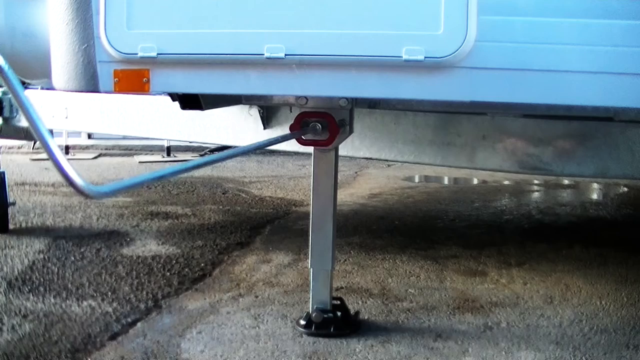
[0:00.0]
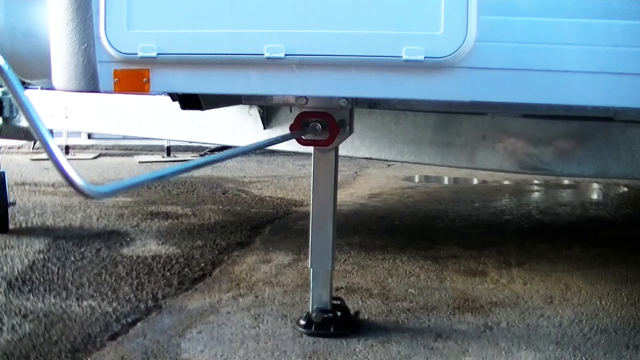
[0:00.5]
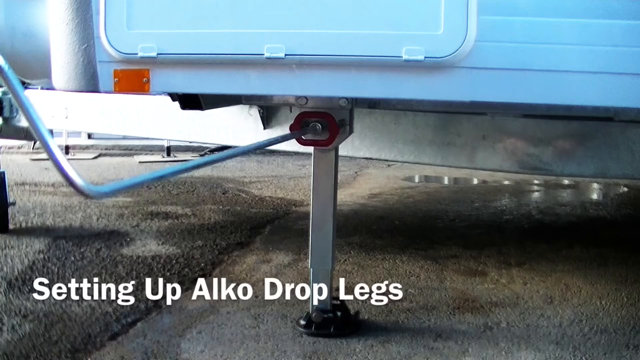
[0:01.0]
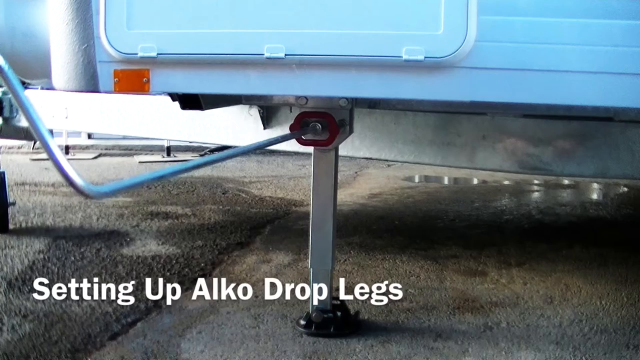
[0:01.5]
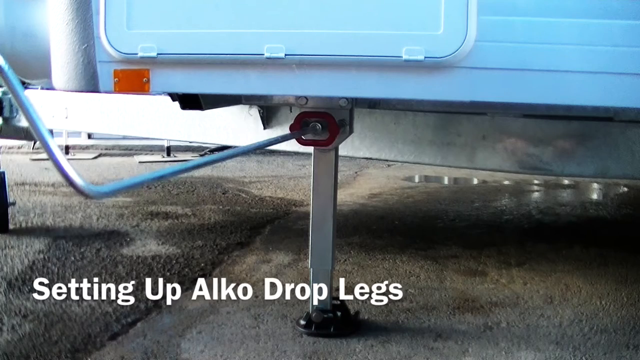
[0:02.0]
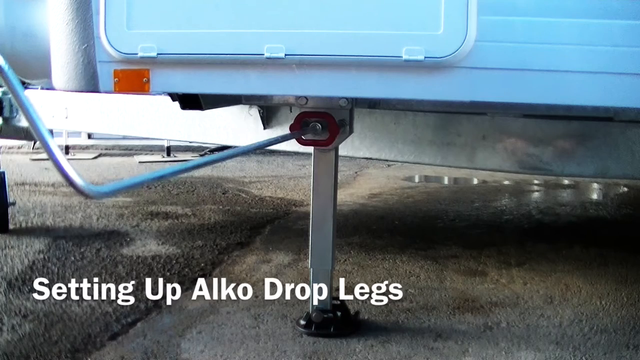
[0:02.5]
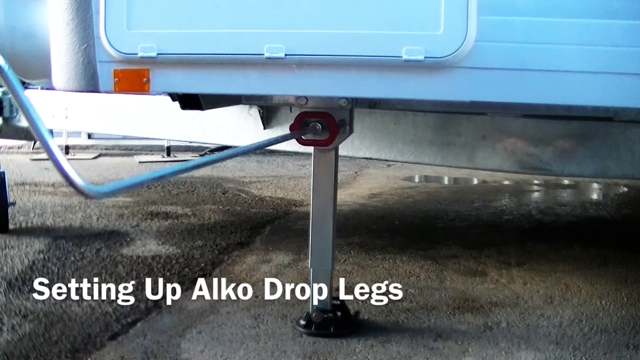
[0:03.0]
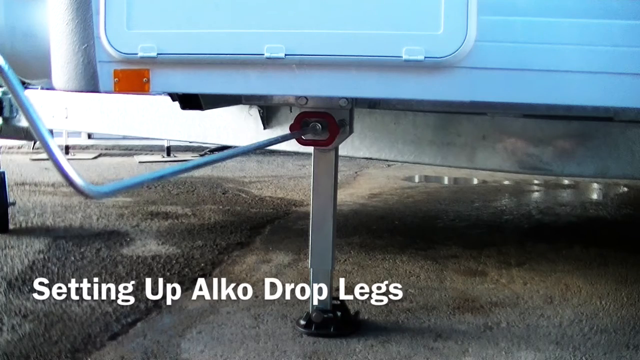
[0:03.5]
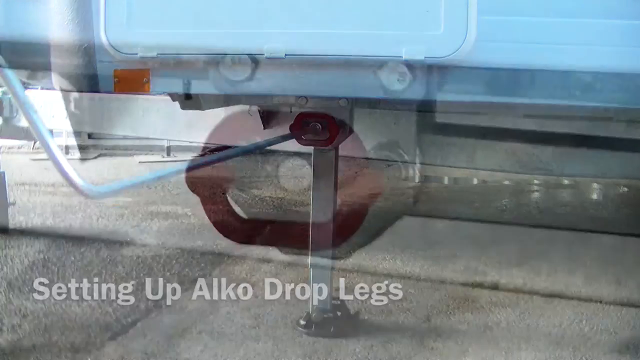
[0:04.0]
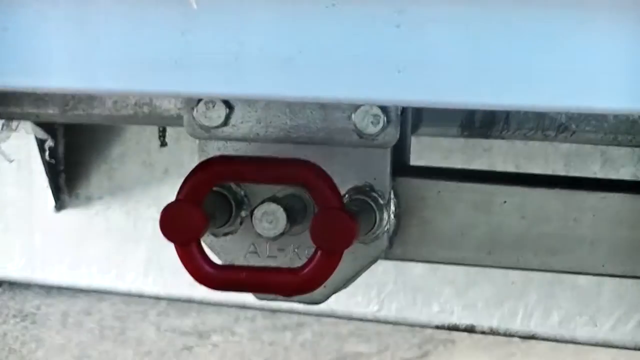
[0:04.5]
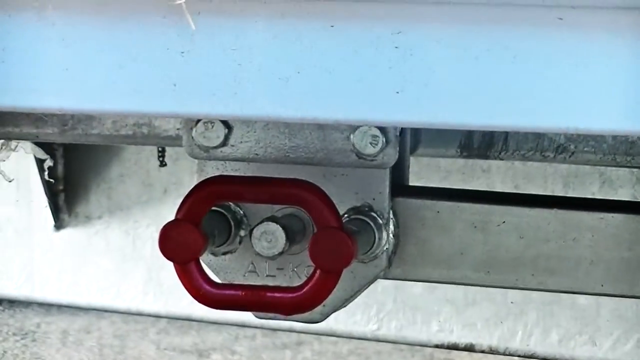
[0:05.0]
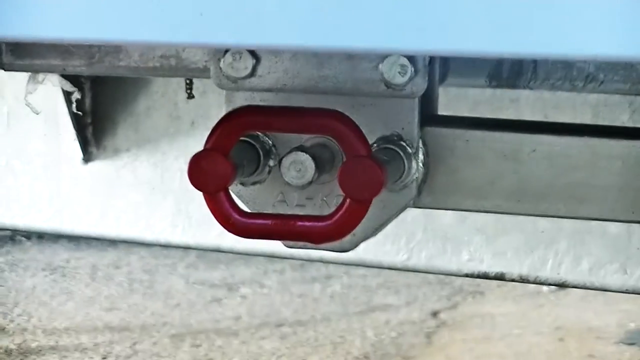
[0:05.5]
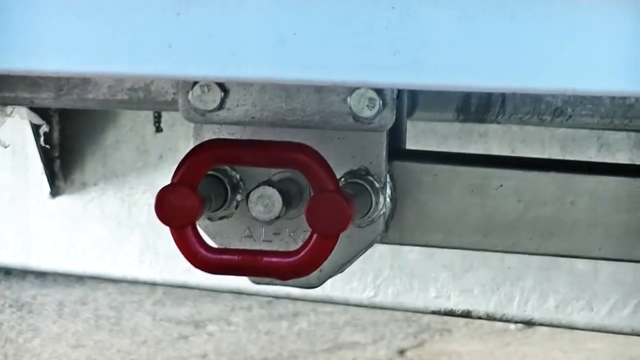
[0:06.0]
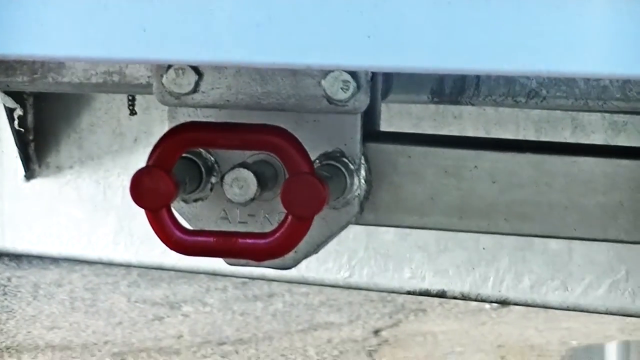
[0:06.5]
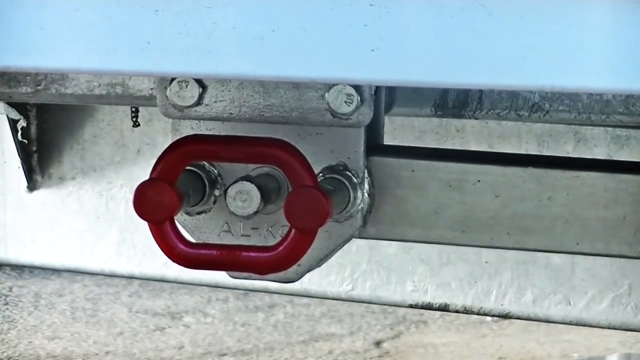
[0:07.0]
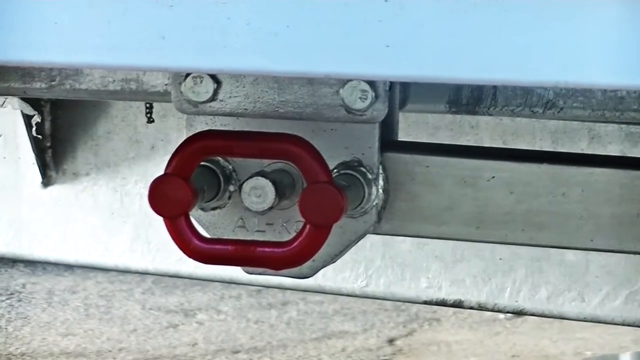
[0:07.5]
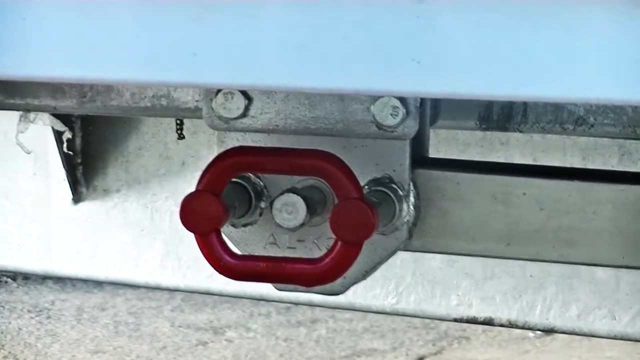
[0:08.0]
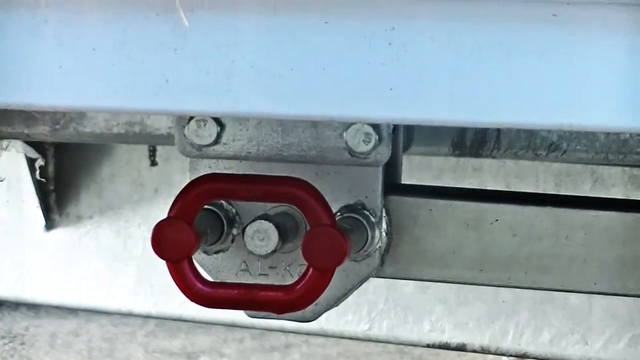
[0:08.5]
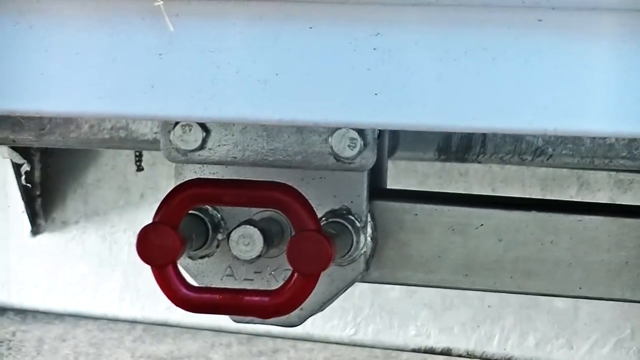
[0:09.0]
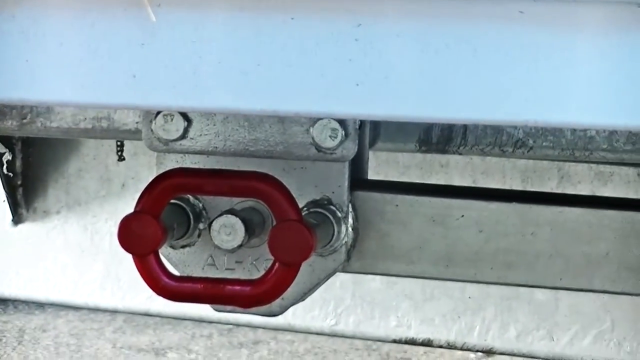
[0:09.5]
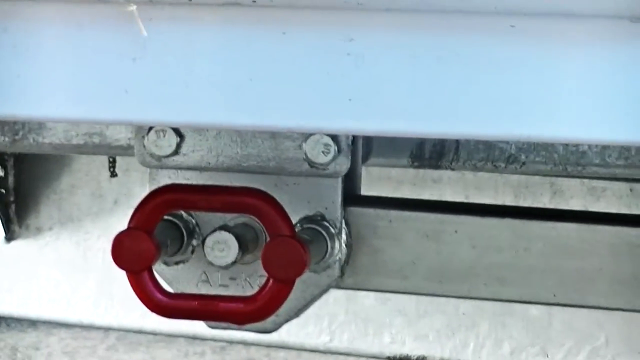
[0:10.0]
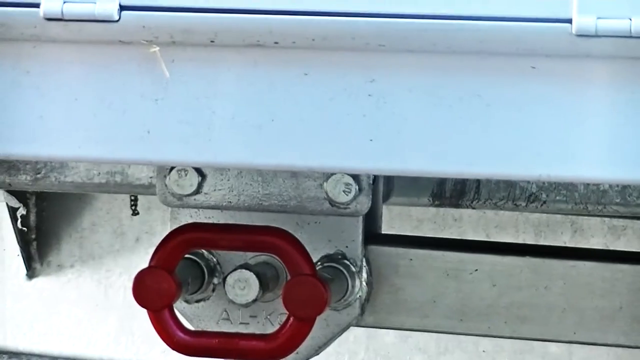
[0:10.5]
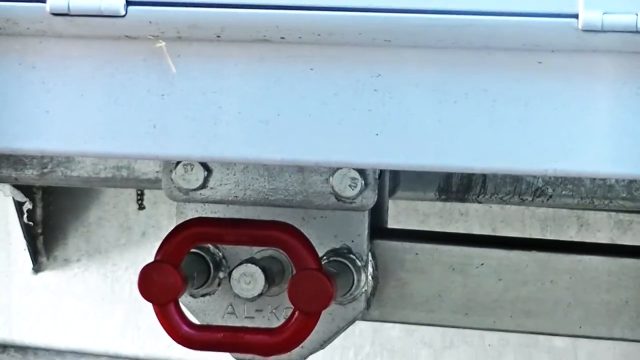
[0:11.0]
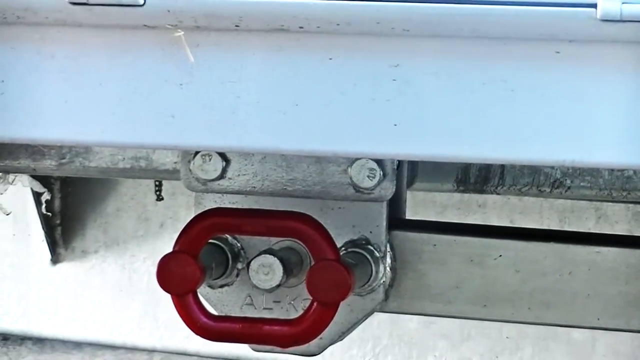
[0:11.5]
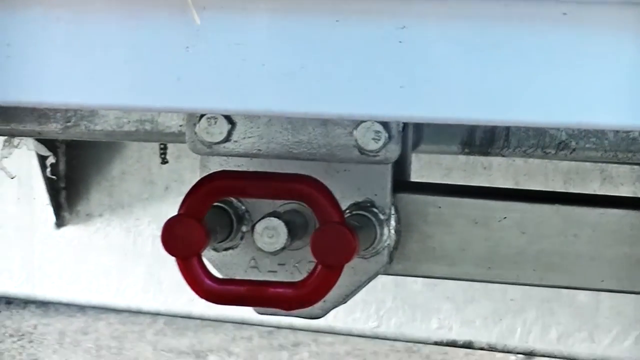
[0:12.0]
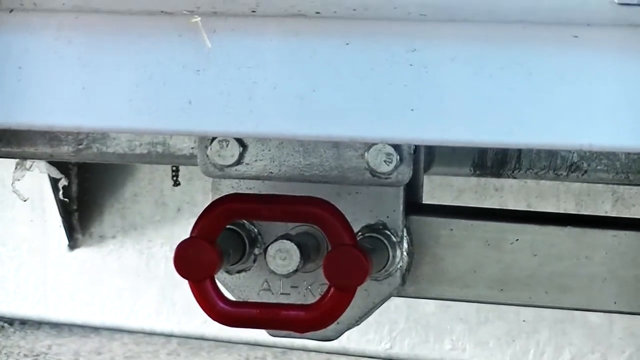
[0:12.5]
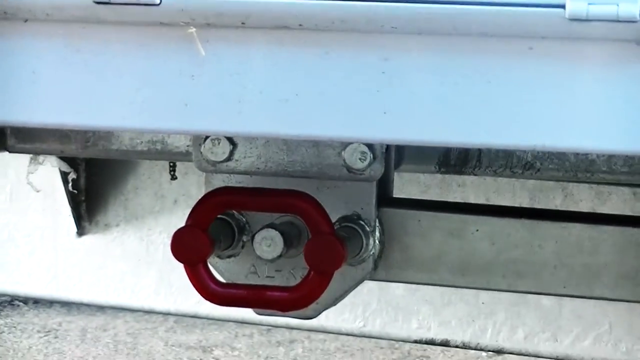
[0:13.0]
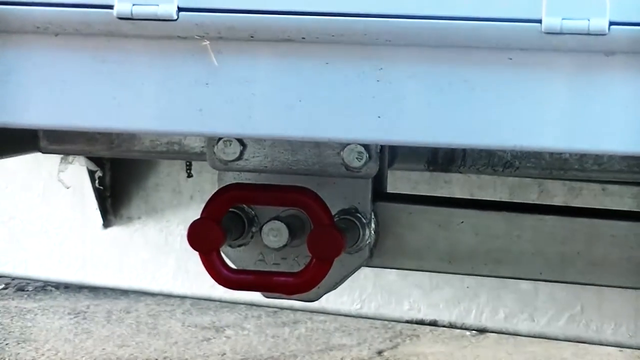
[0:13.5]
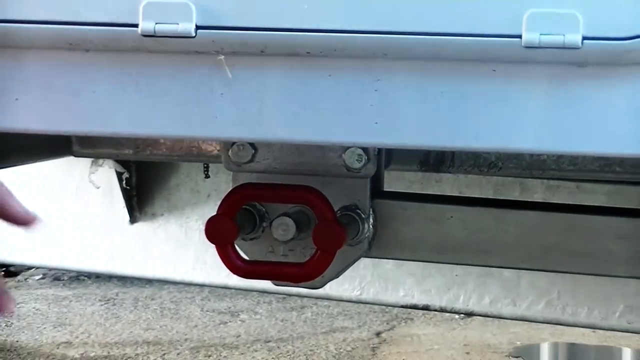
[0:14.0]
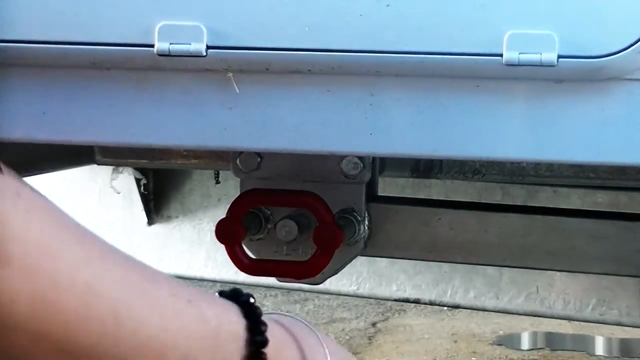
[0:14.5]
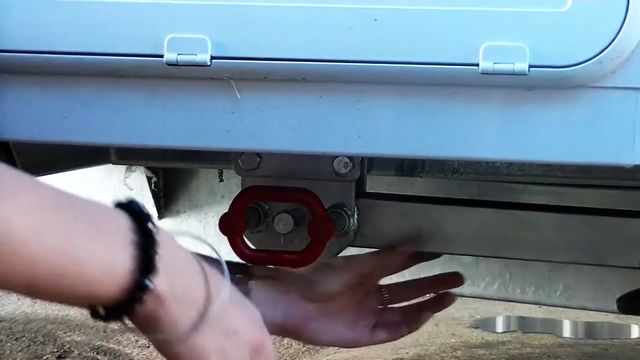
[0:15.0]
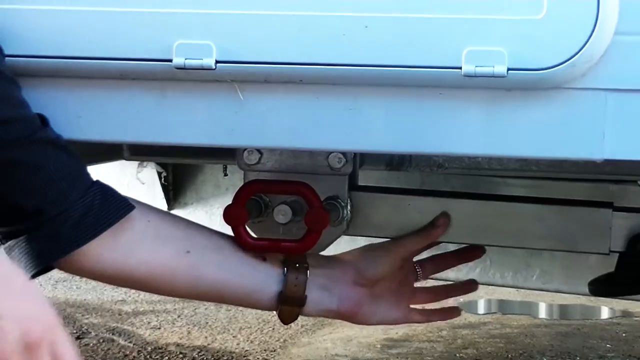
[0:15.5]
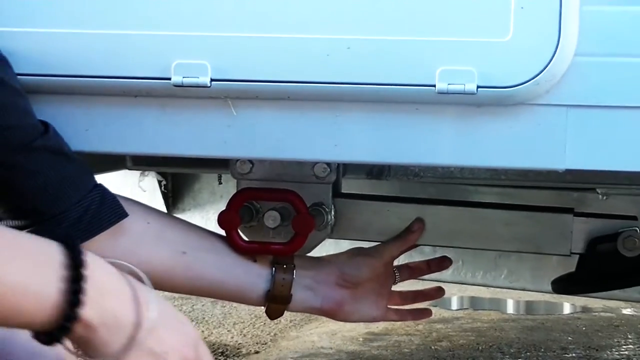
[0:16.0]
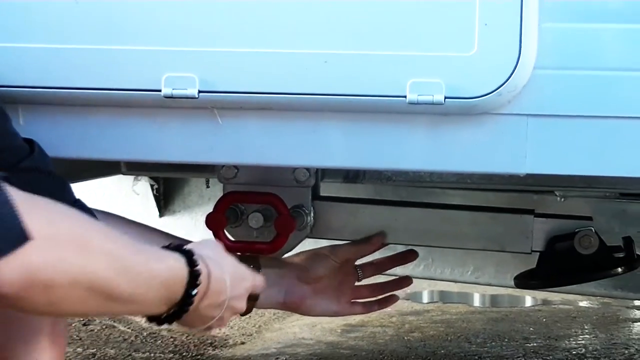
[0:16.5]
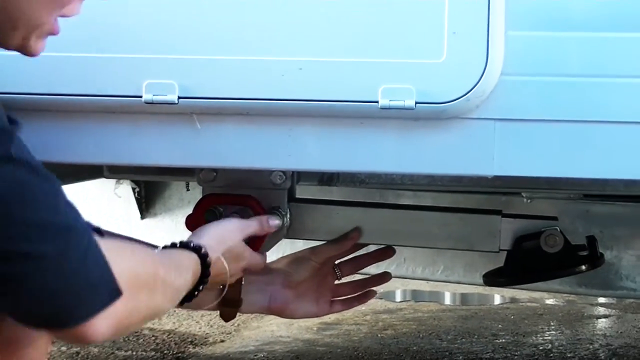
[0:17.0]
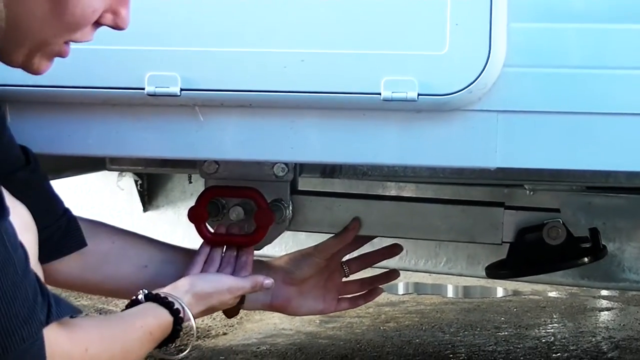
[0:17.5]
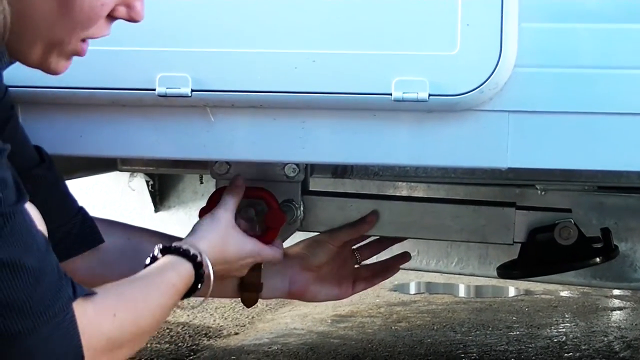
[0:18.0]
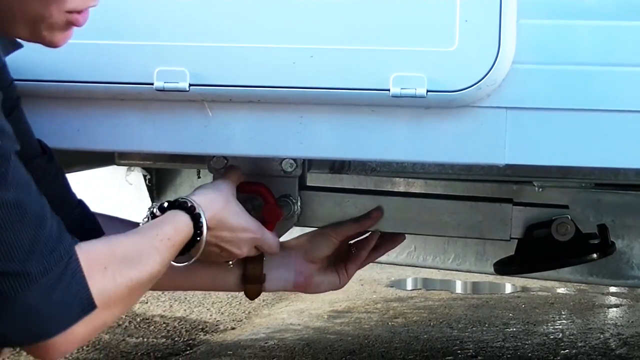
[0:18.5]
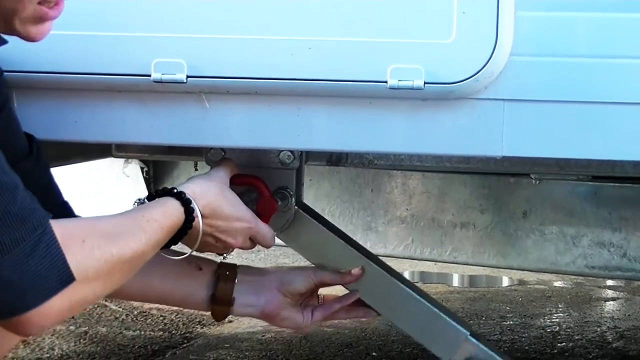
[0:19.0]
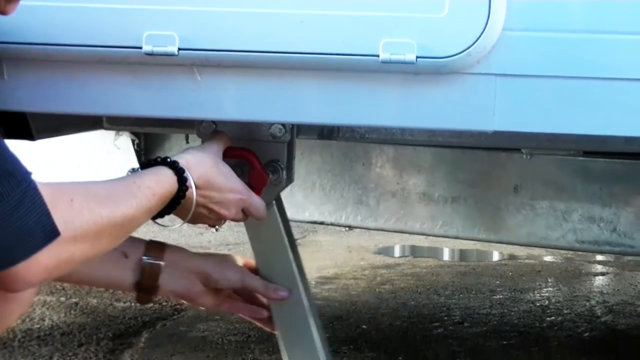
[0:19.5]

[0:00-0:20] Across the top of the frame is the side of a blue vehicle, with metal underneath it. In the center a leg comes down that looks almost like a jack. A big handle comes off it, going left about two feet, then angles up to the left and goes off screen. Concrete is below it, and in the bottom left corner white text reads "setting up ALCO drop legs." The view then goes up close: blue runs across the top with silver below it, and in the center a little, kind of silver square comes down. It has a big, circular red handle in the center, with a bow up to the left and a bow up to the right. The camera is shaking quite badly as it looks at this. As it slowly pans out, two hands come in from the left side. One reaches under, palm toward the camera and fingers open, and grabs hold of the metal brace coming off the side that has the circle; a brown wrist is visible. The other hand drops down to the person's side, then reaches up to grab the red part that is kind of like a circle. The person wears a little bracelet and a blue shirt that comes down to their elbows, and a little of the side of their face comes in at the top. They hook their hands under, and with the right hand they pull on the red circle, which makes the metal brace that was going to the right drop; they lower it with their hand down to the ground.